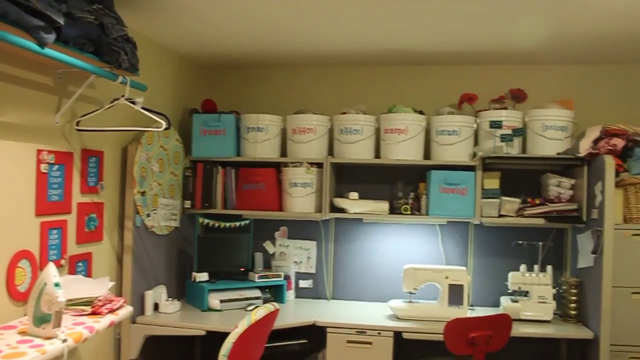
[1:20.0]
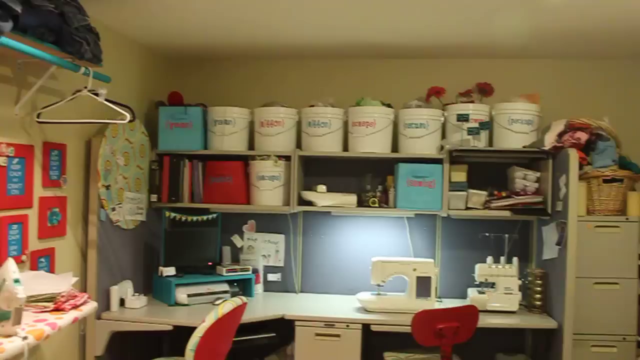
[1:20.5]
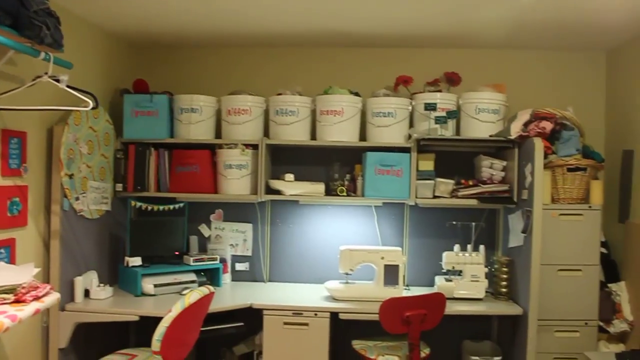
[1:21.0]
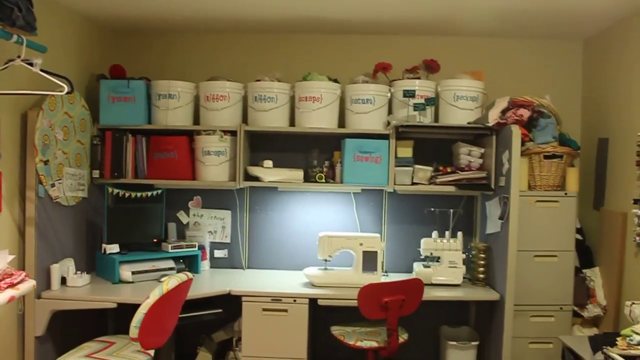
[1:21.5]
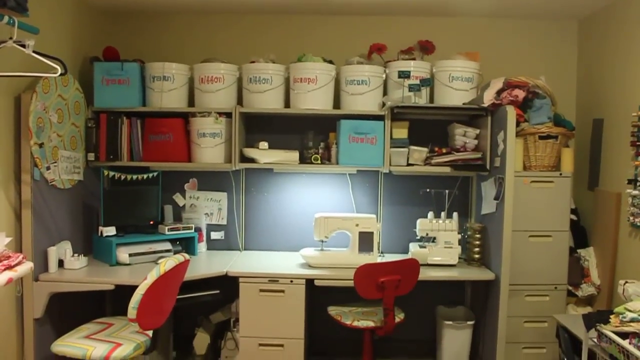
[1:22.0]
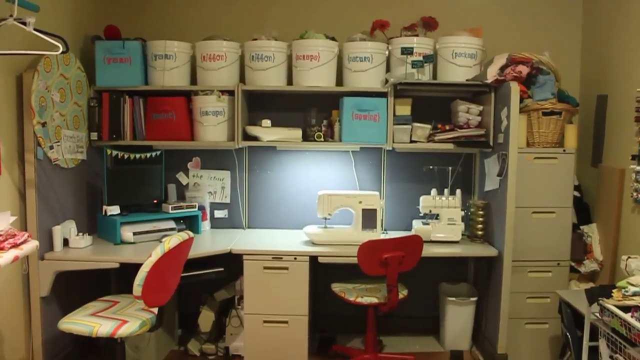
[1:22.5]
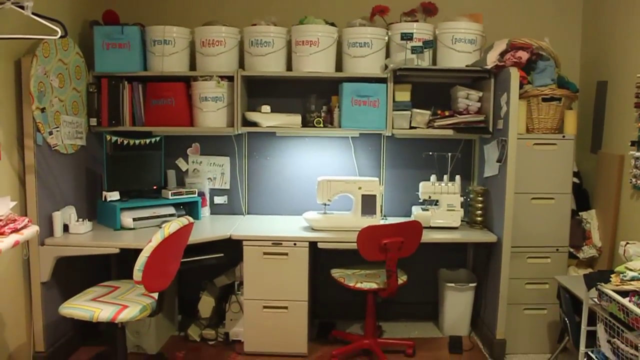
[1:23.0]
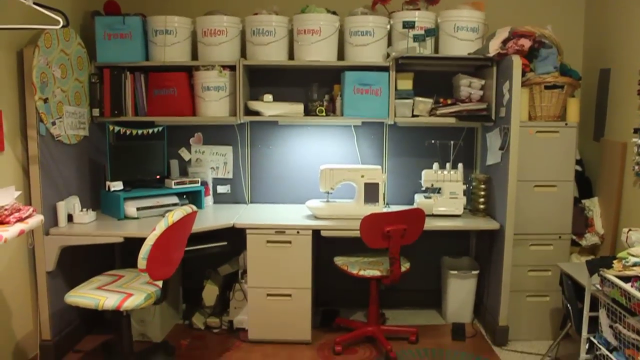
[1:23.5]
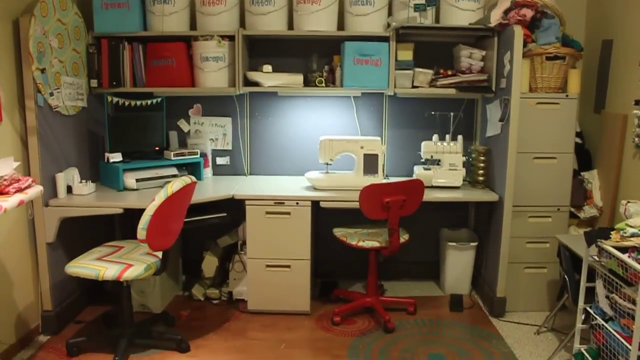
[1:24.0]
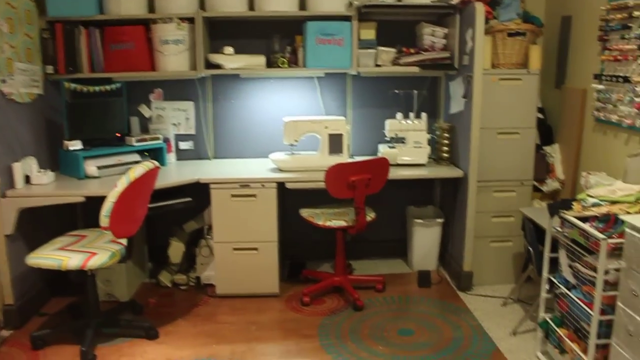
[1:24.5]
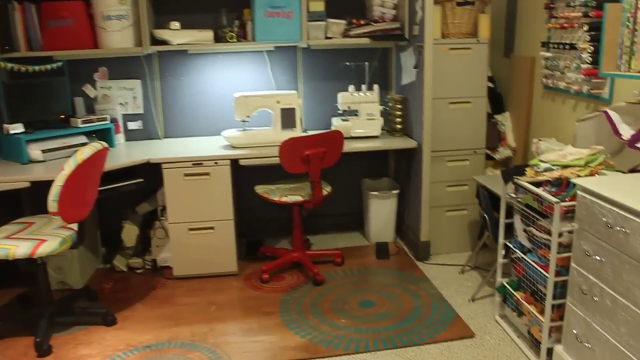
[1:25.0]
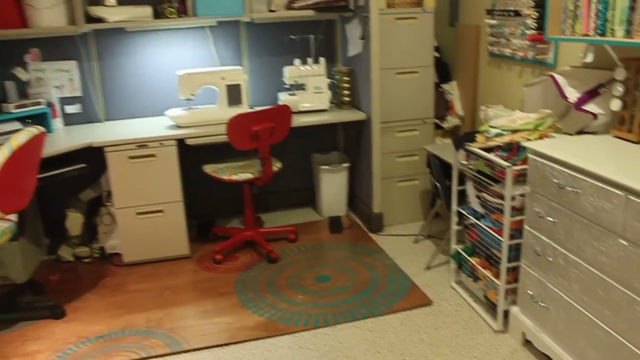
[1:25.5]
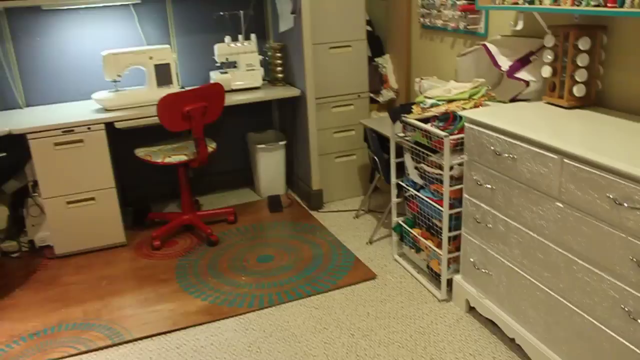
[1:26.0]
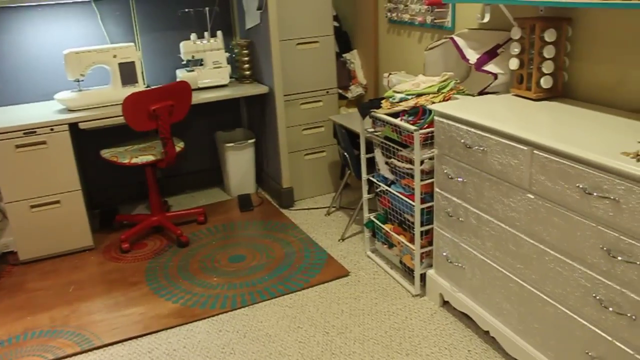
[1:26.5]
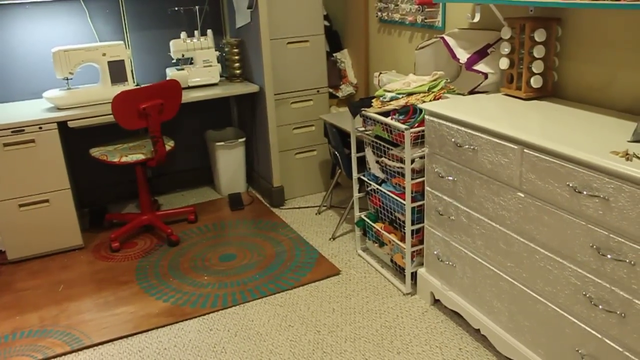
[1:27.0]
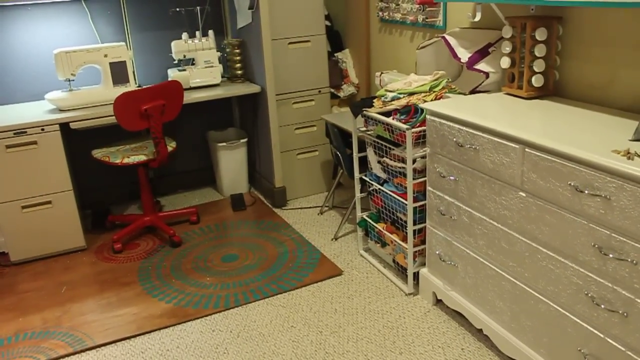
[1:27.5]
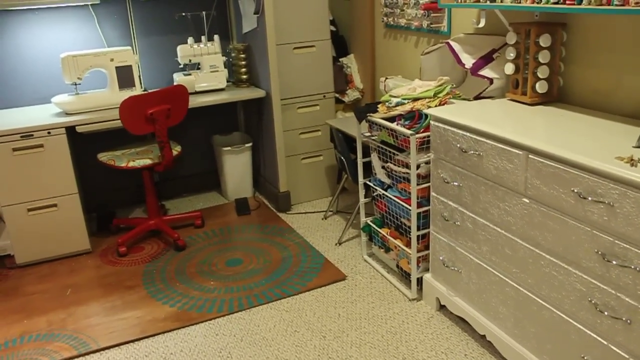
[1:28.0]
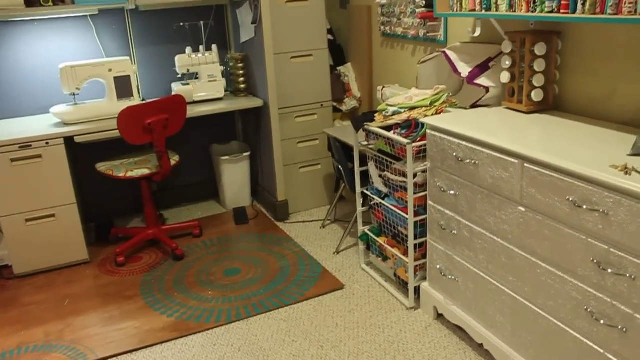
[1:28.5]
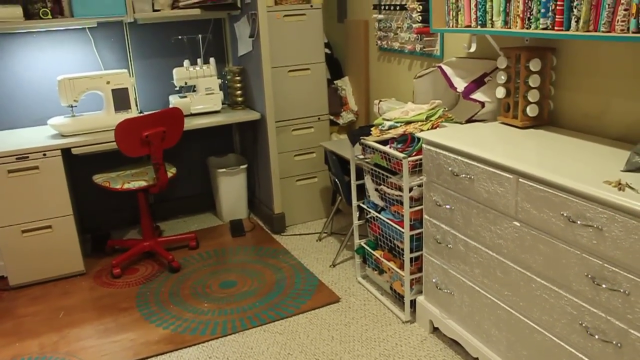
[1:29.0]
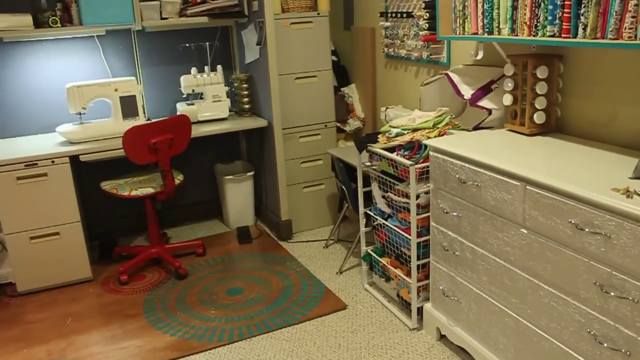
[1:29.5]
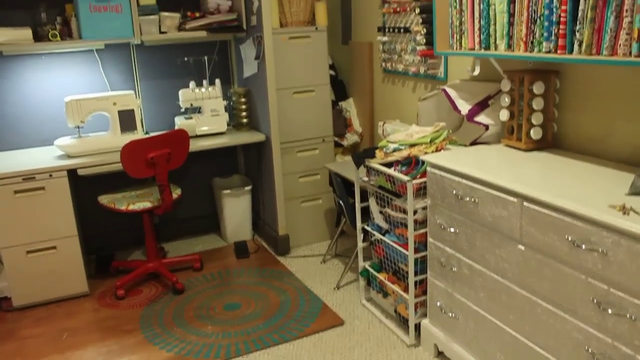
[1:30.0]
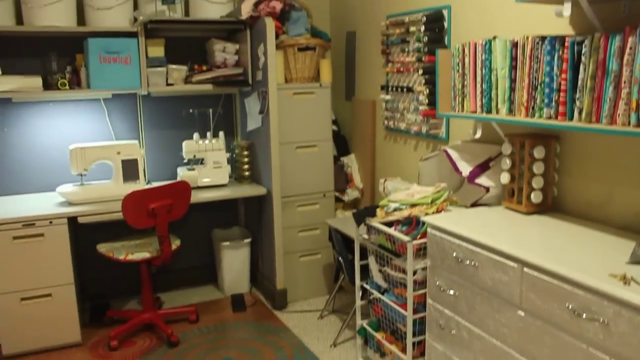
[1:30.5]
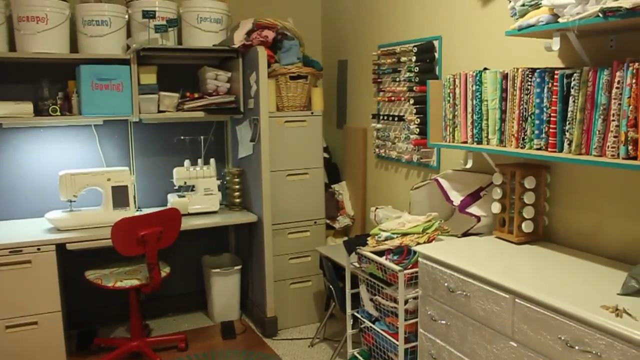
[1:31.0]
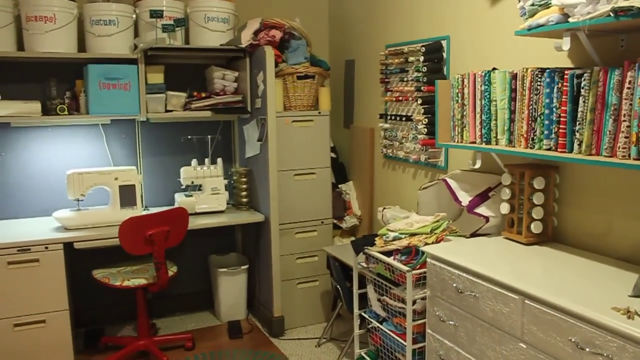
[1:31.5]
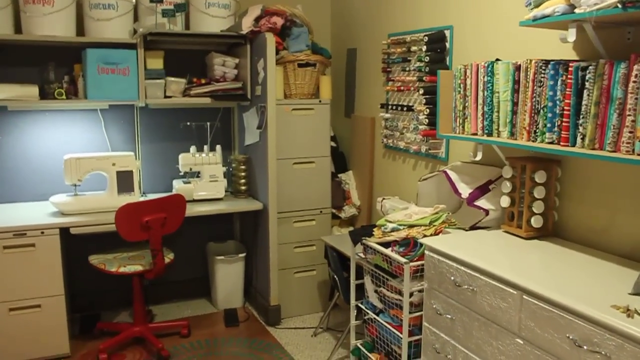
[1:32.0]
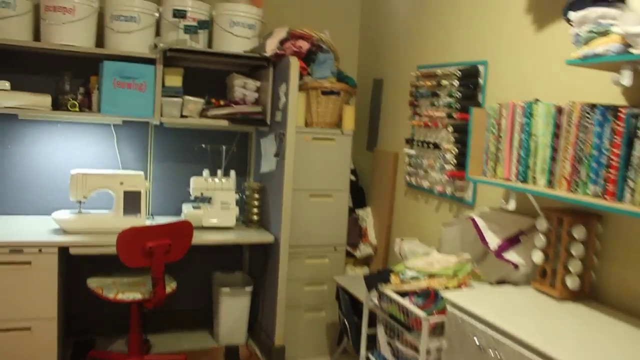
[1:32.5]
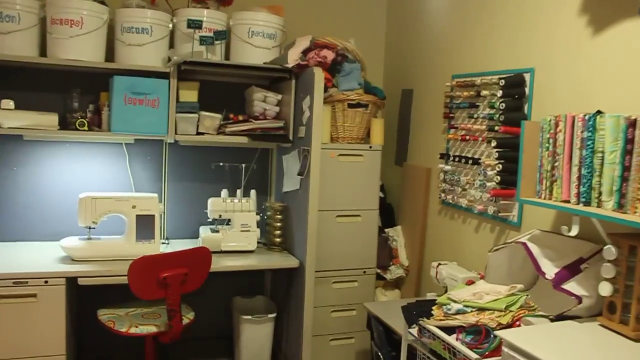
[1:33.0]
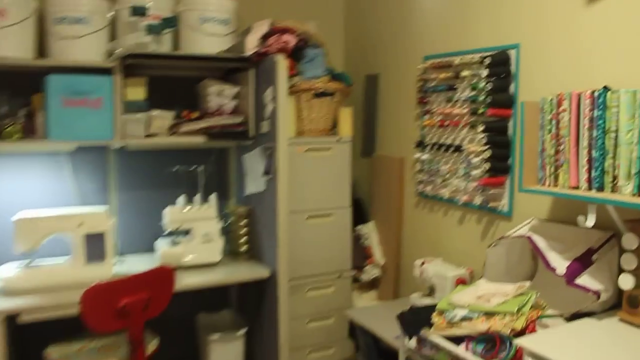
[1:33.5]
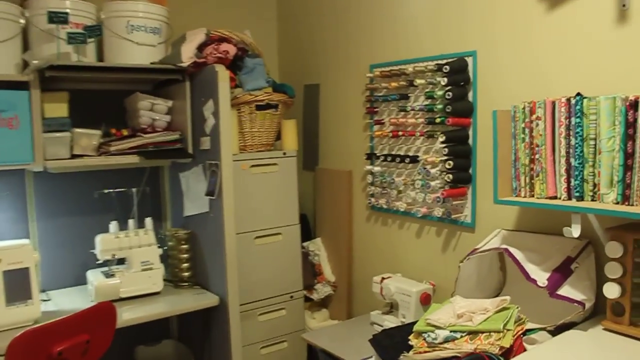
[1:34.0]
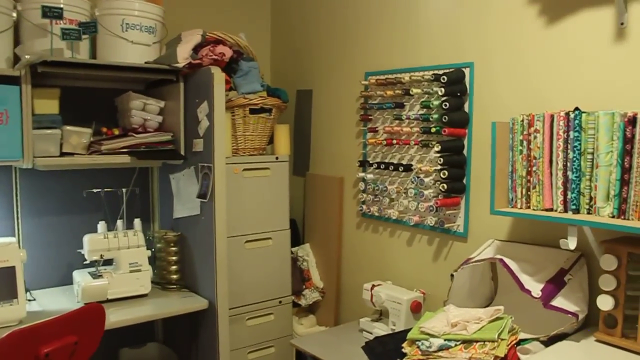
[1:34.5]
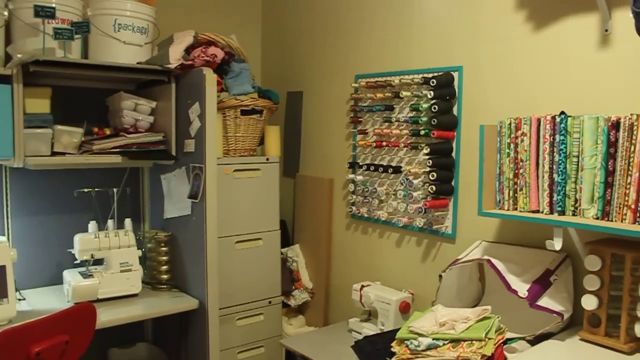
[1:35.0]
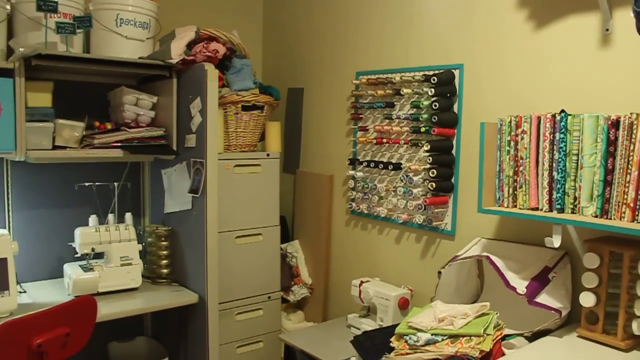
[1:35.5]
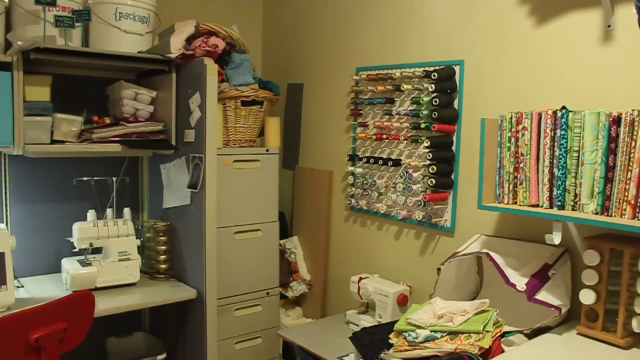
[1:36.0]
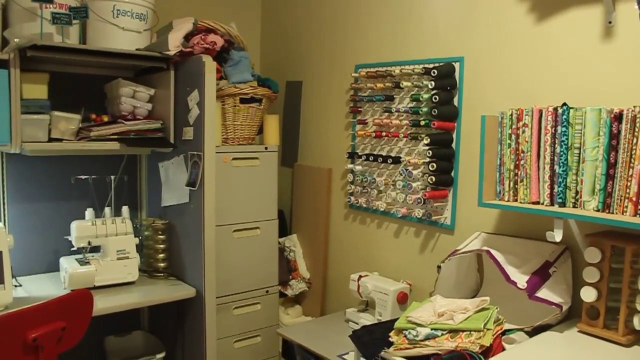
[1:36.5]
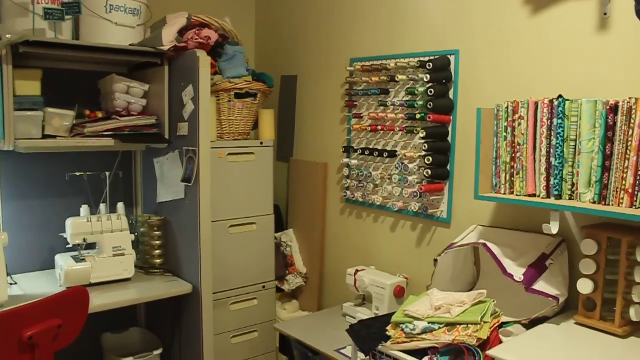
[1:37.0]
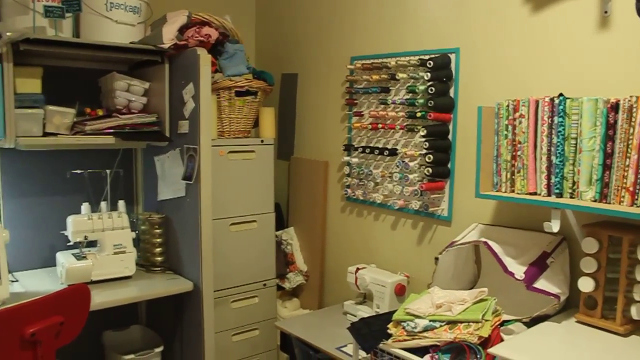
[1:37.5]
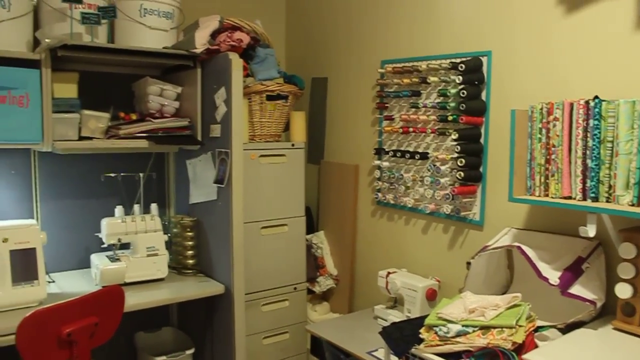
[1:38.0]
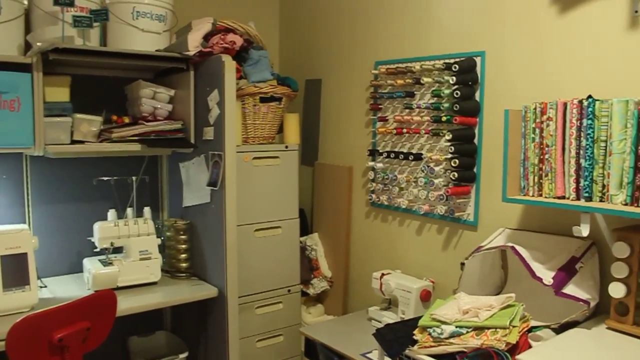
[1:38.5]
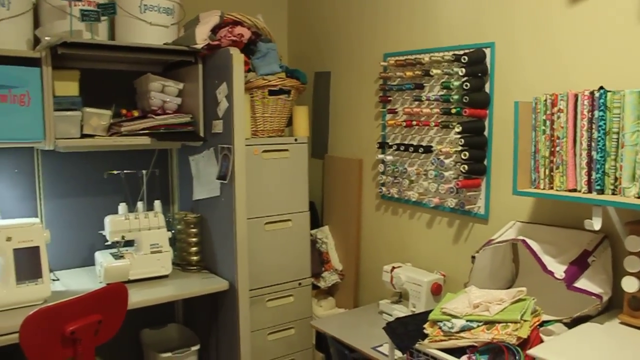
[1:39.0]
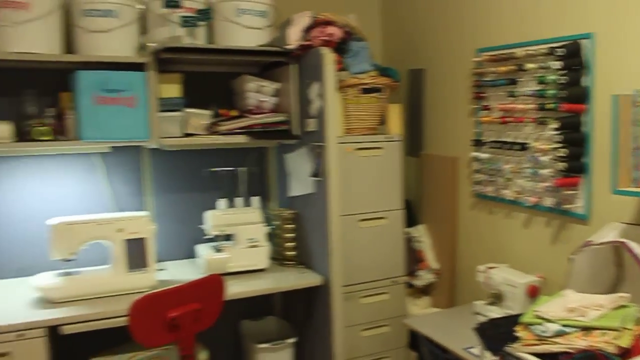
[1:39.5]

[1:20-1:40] The camera pans through the back of the room and settles on the desk, slowly panning up and down to display the entire white desk. There are two shelves on top of the desk. The topmost shelf has various buckets, all filled with materials used for crafting. The shelves below have random materials strewn about, including buckets, boxes and loose items. The camera then pans to the right side of the room, where a grayish, dull-colored filing cabinet can be seen. Various materials hang off the walls, and there appears to be a board with threading material hanging off it. There are also shelves holding various materials used for knitting. Under the shelf is a white dresser, and on top of the dresser there appears to be a spice rack.